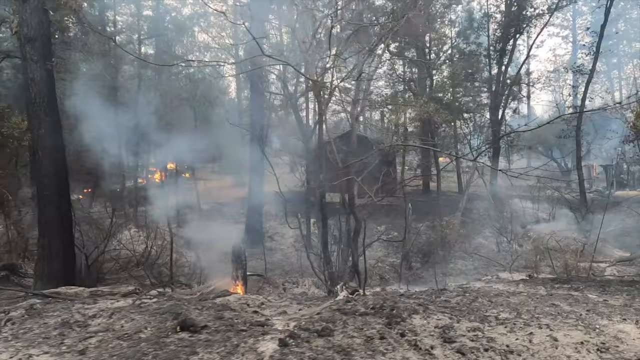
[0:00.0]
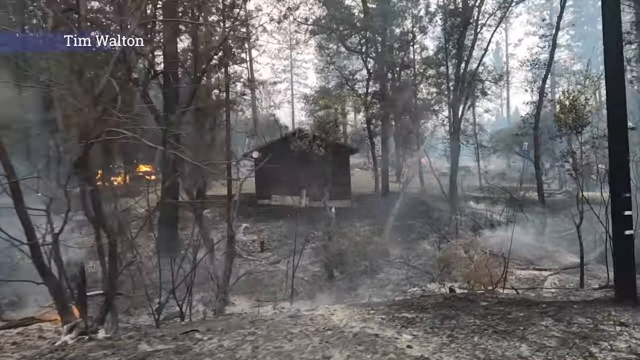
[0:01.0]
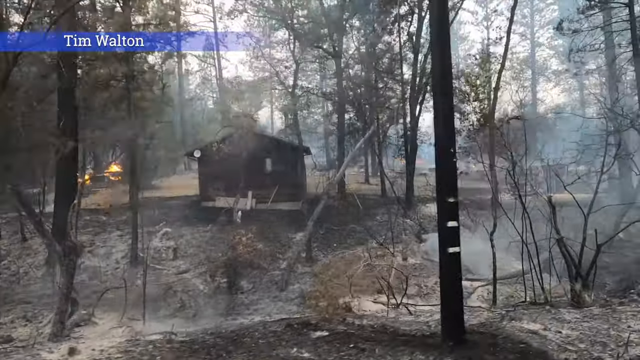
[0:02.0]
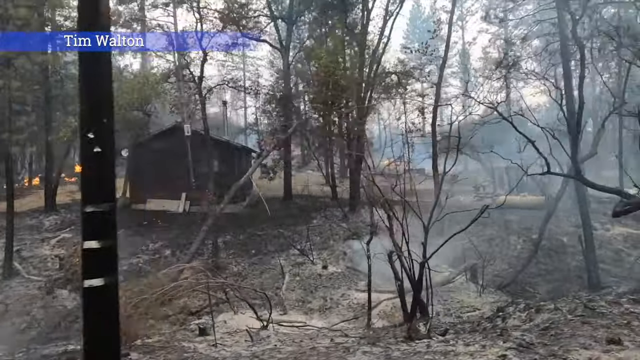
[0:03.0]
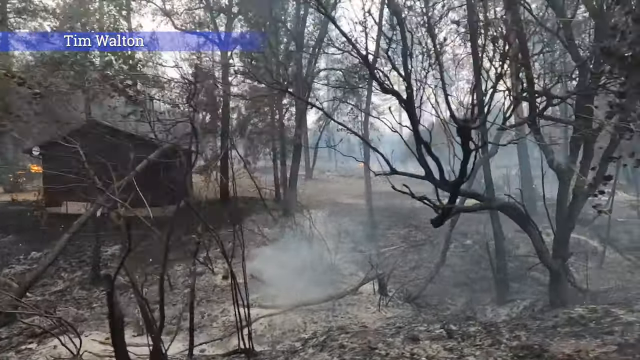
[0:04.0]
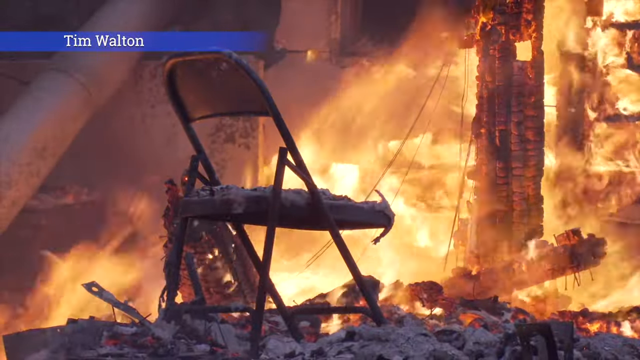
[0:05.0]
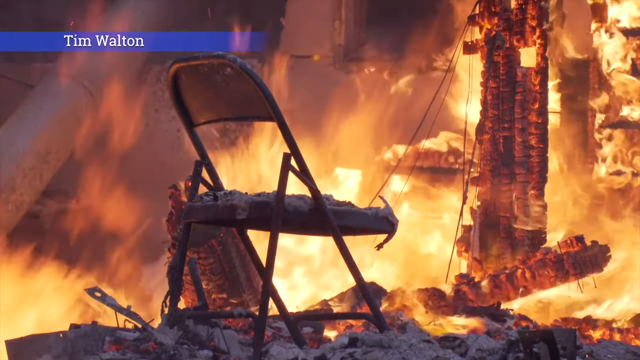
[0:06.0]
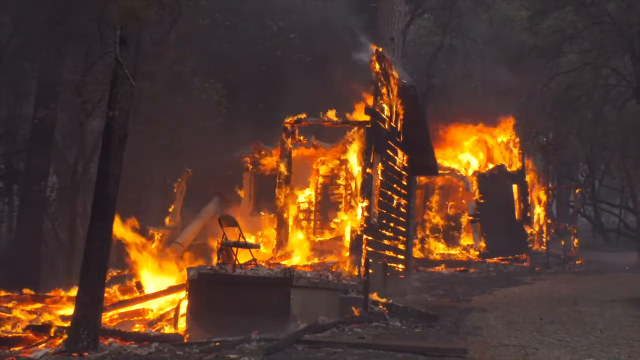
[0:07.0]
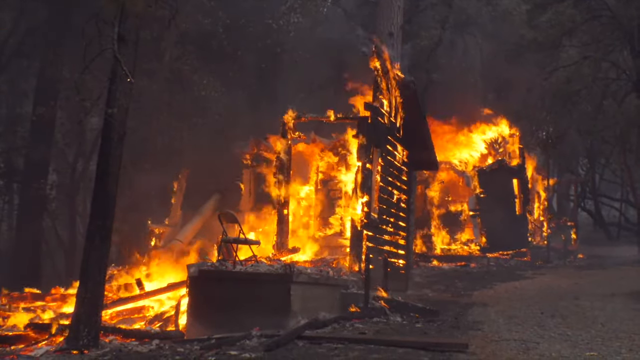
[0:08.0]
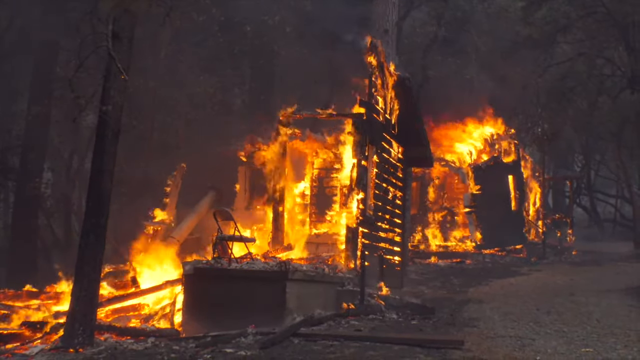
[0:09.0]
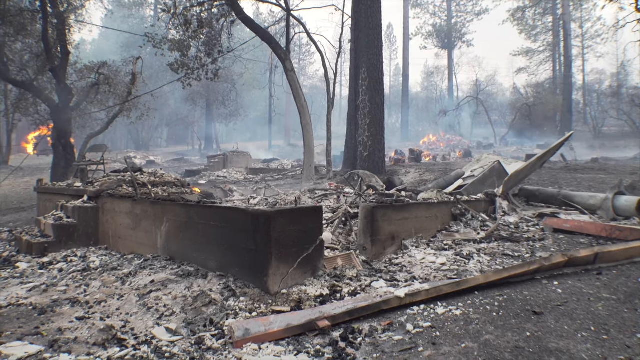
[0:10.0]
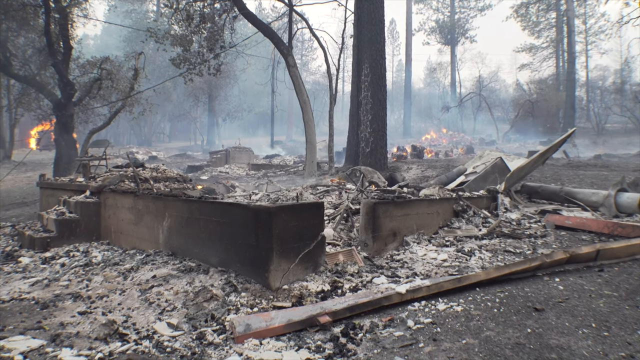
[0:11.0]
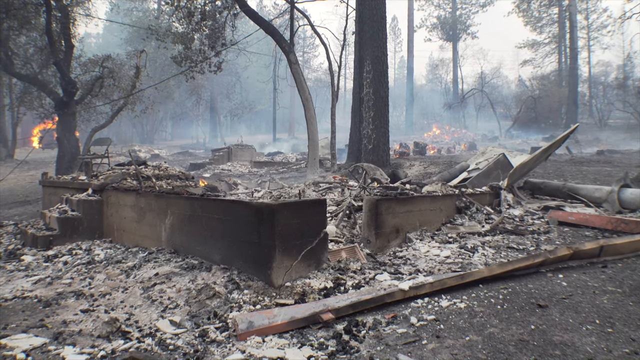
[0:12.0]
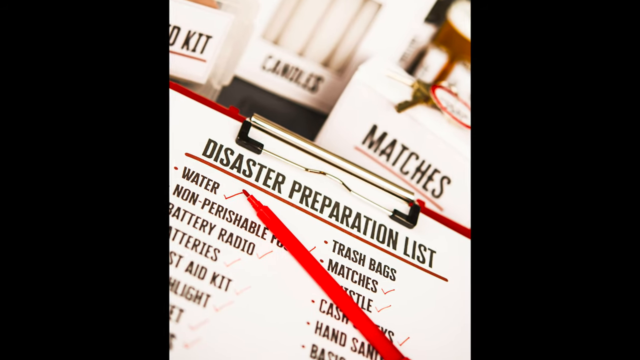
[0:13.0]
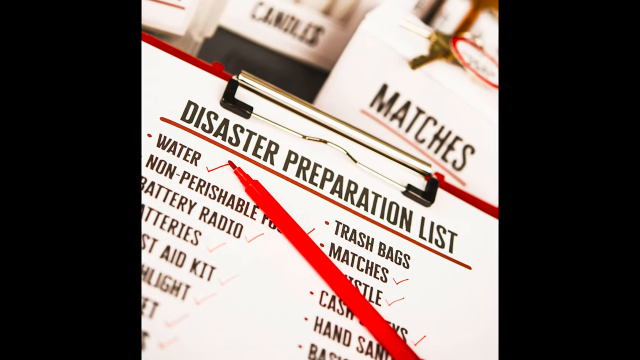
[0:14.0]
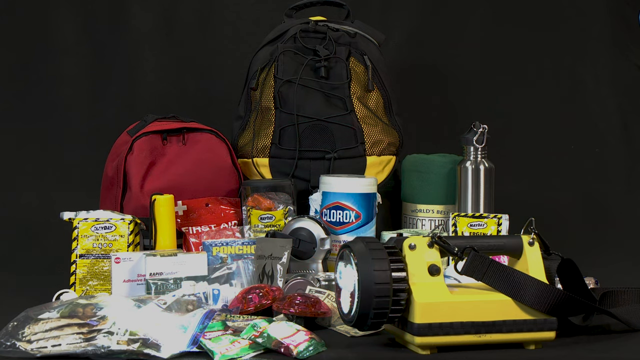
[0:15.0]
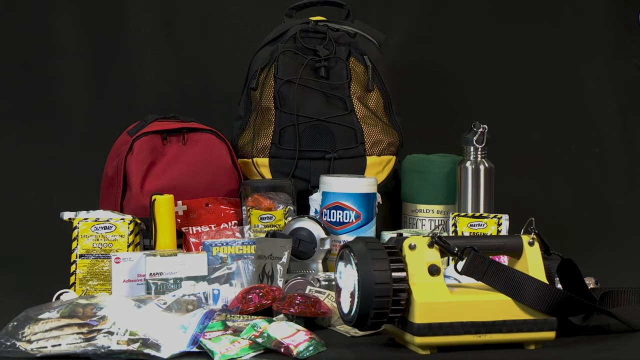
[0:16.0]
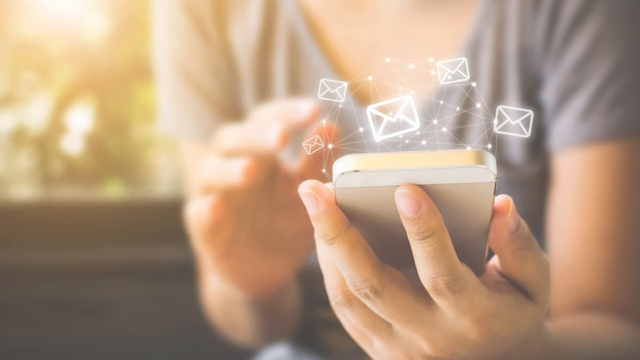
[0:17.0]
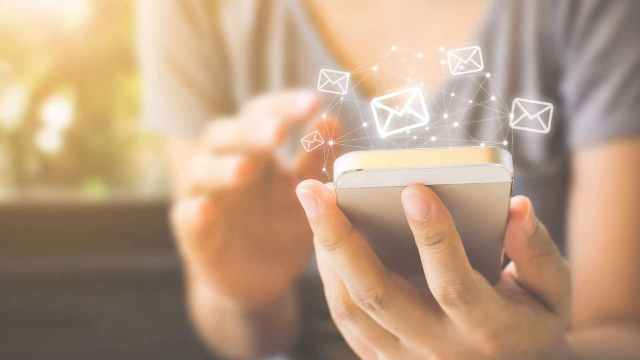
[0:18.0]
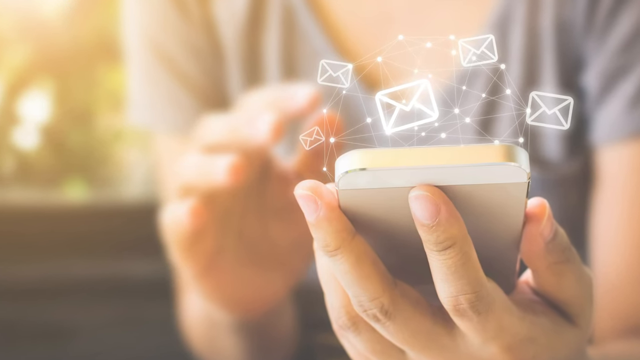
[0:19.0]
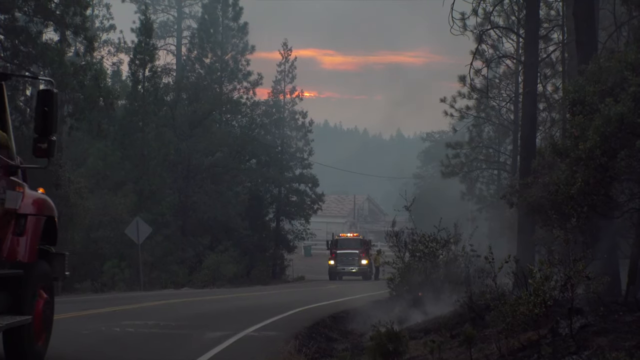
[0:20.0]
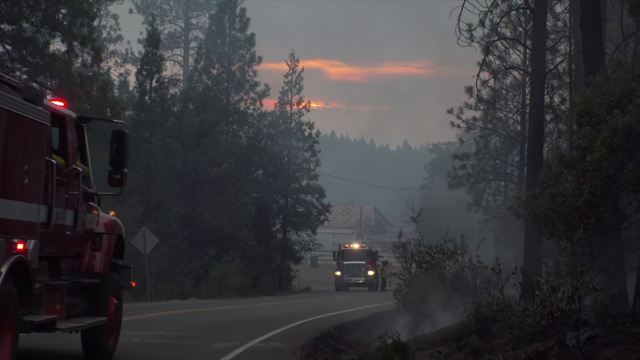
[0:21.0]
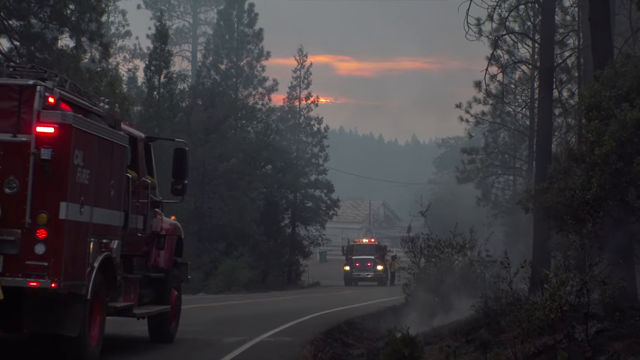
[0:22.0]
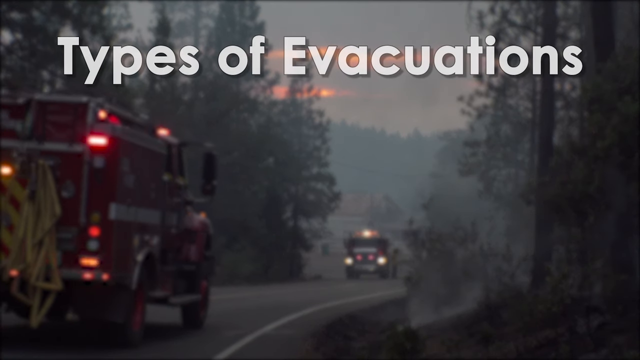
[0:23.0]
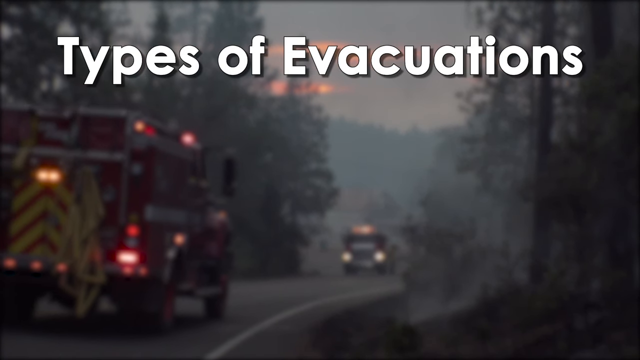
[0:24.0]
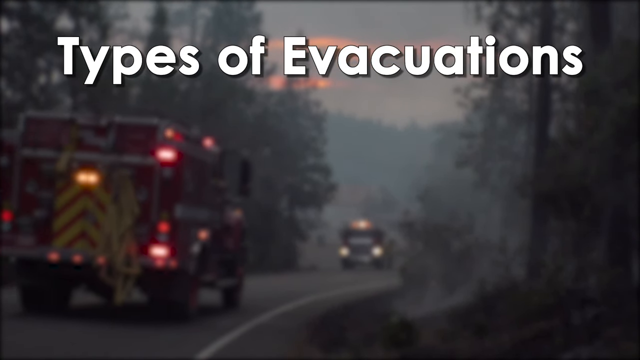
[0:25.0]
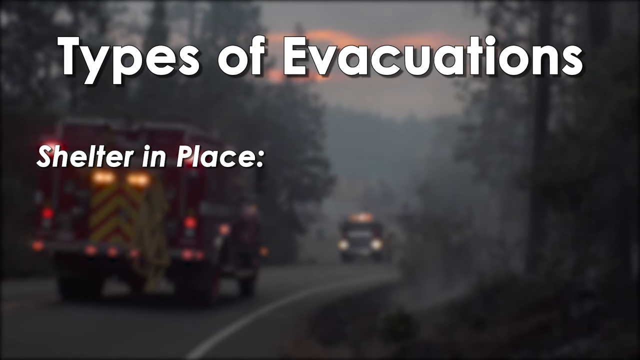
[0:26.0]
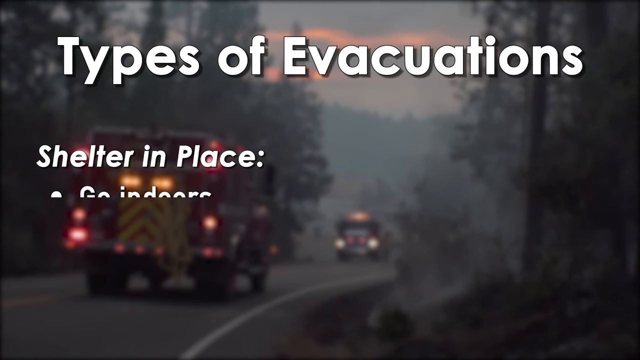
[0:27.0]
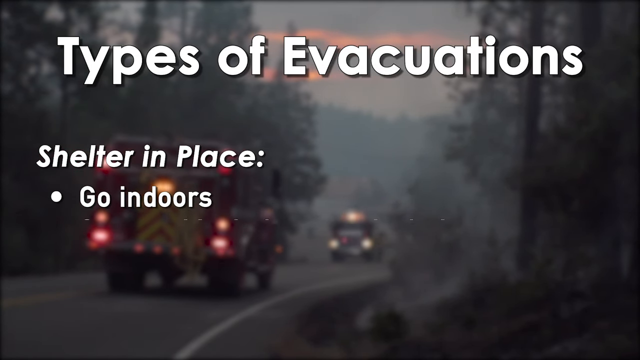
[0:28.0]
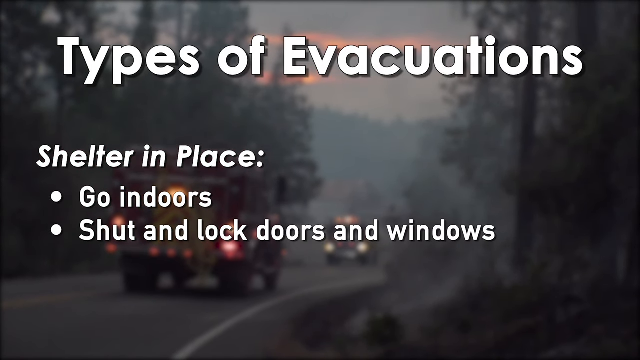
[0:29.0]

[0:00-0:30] A forest contains bunkers or wooden houses where people live. The area looks like it has been hit by something, maybe a wildfire, affecting the plantations and infrastructure; fire and smoke are visible. The person presenting the video is apparently Tim Walton. A house has caught fire, and the furniture inside has burned as well.